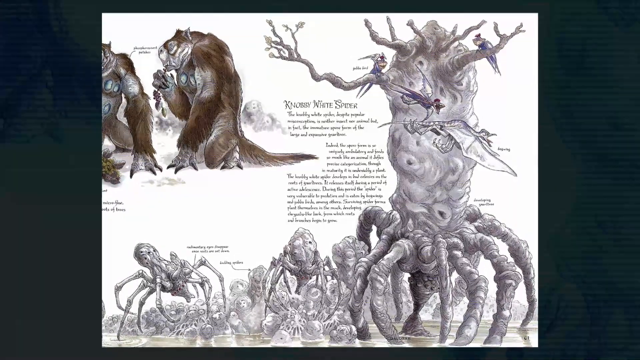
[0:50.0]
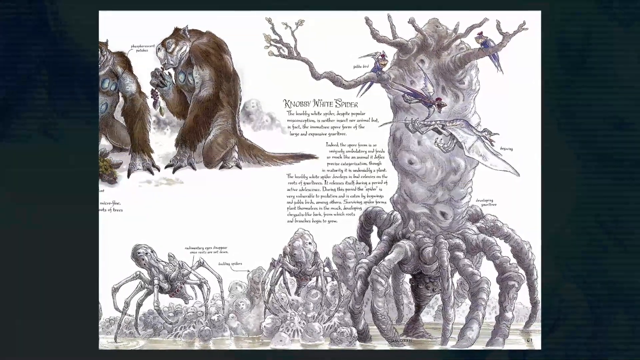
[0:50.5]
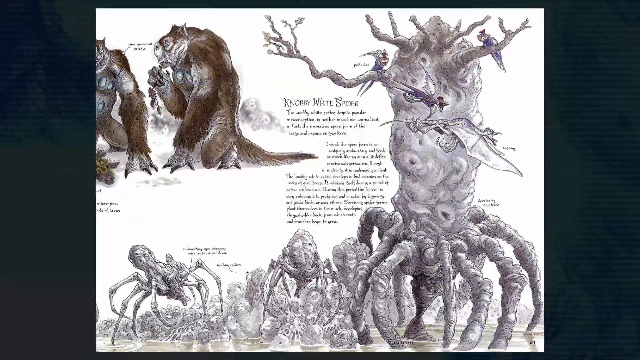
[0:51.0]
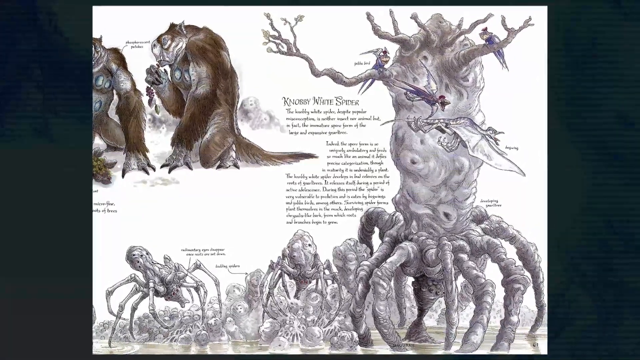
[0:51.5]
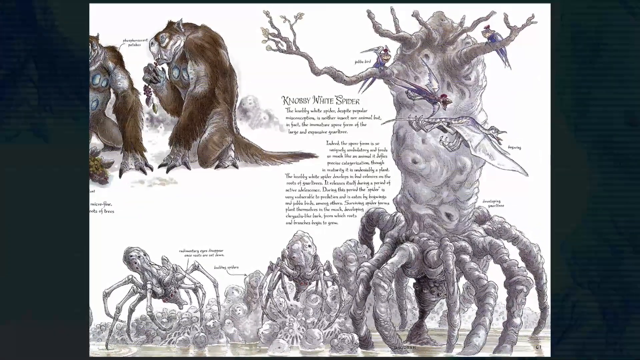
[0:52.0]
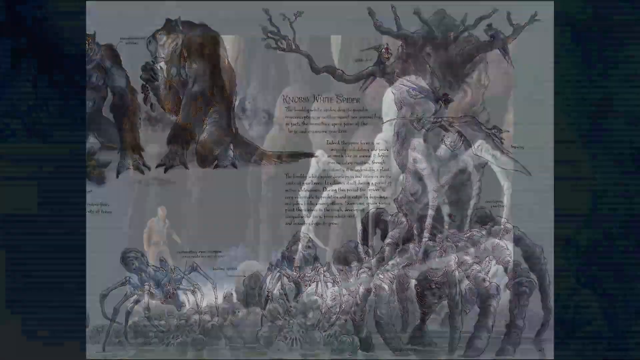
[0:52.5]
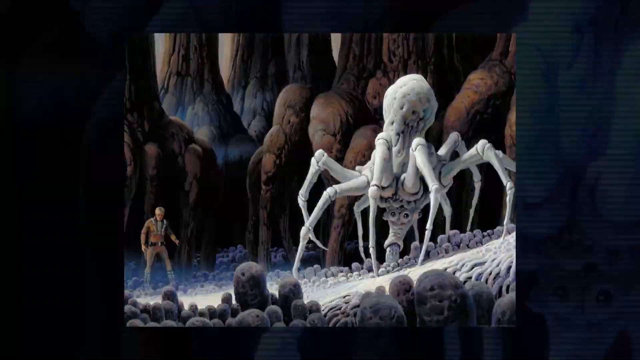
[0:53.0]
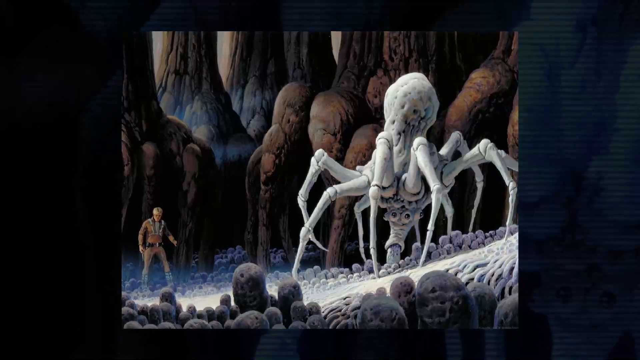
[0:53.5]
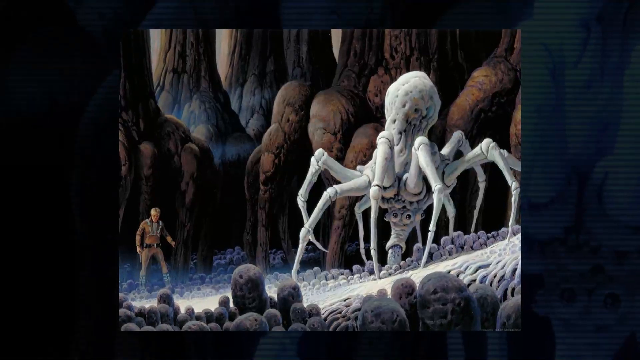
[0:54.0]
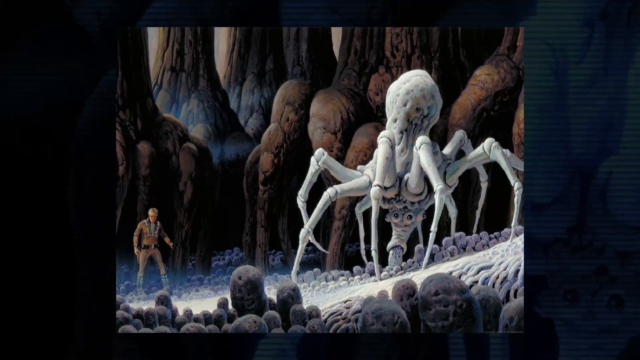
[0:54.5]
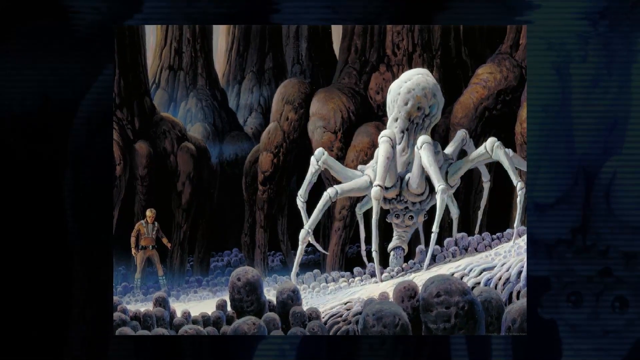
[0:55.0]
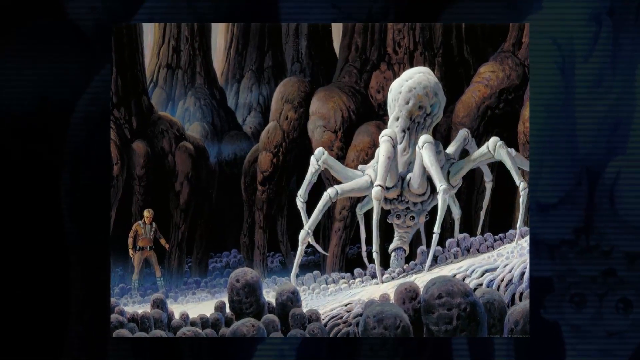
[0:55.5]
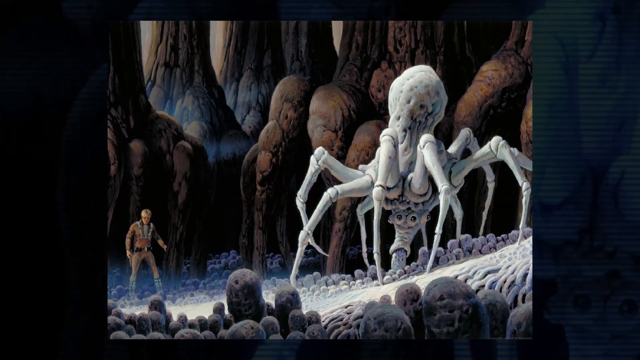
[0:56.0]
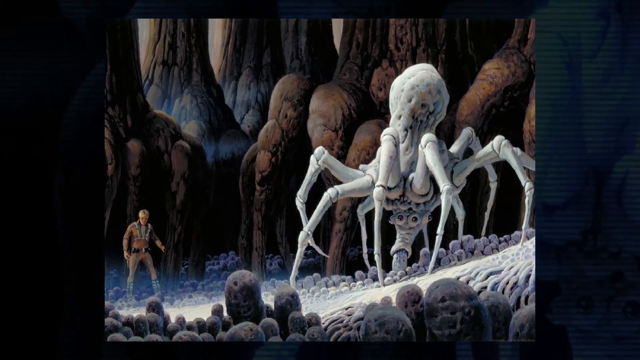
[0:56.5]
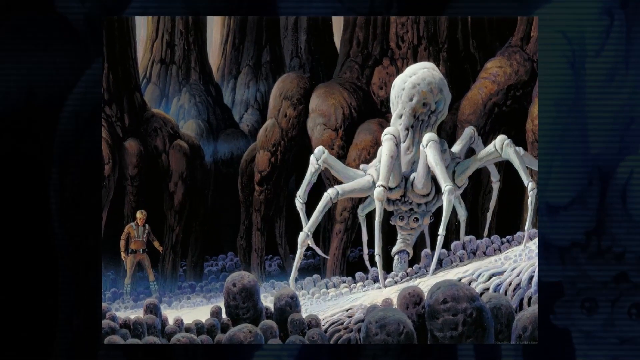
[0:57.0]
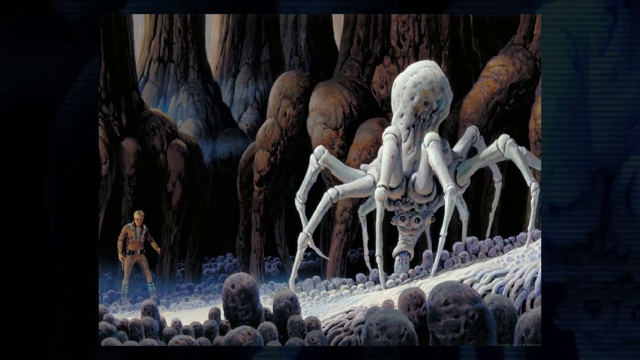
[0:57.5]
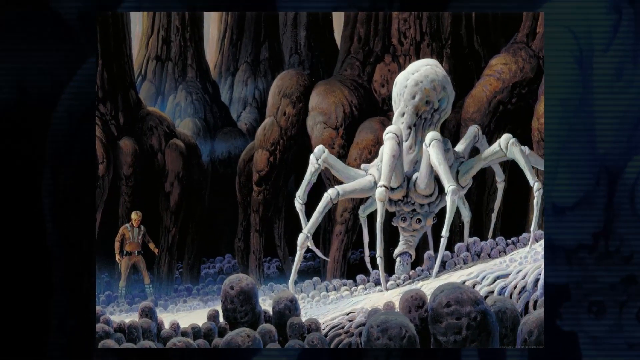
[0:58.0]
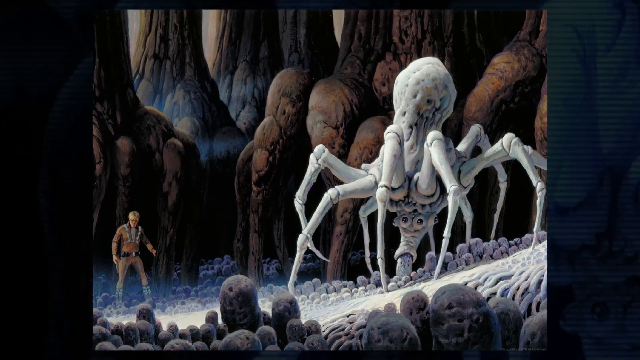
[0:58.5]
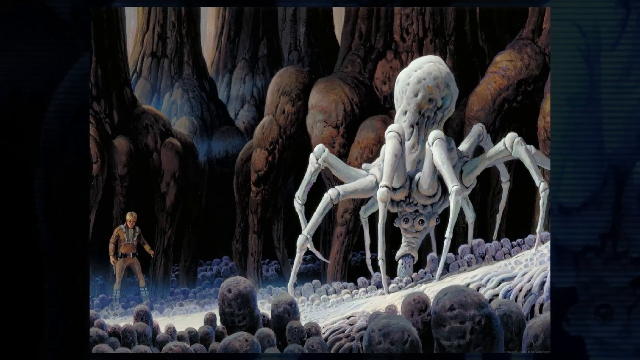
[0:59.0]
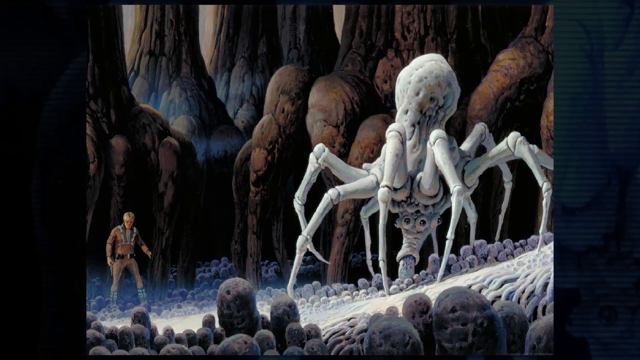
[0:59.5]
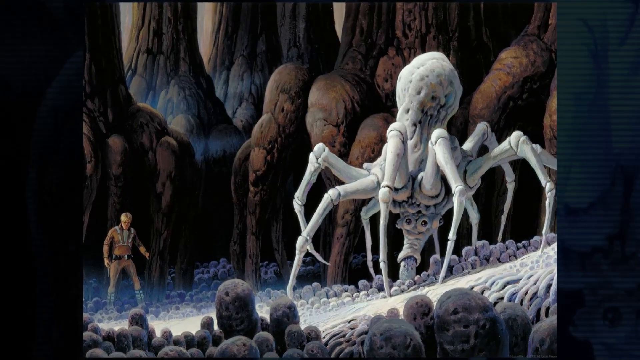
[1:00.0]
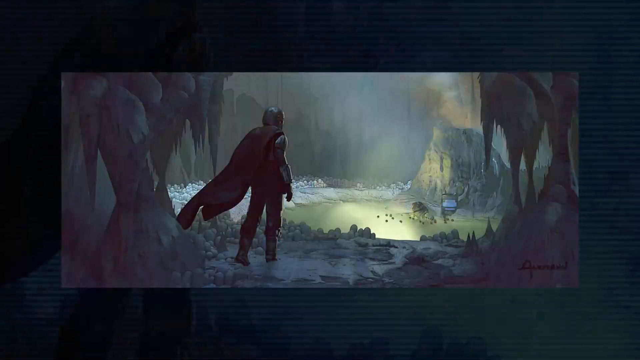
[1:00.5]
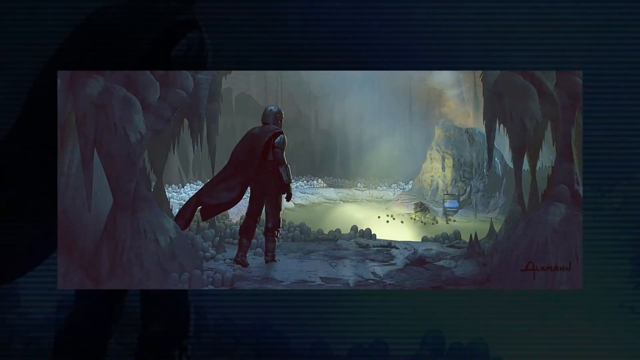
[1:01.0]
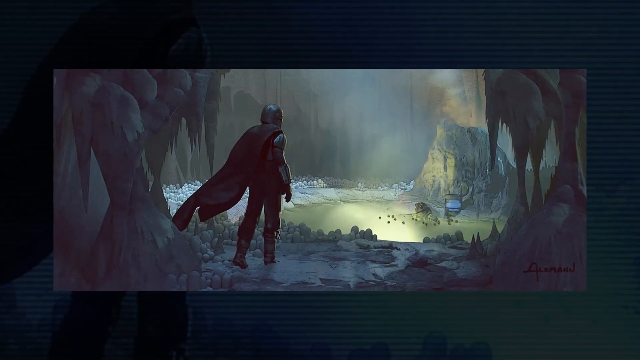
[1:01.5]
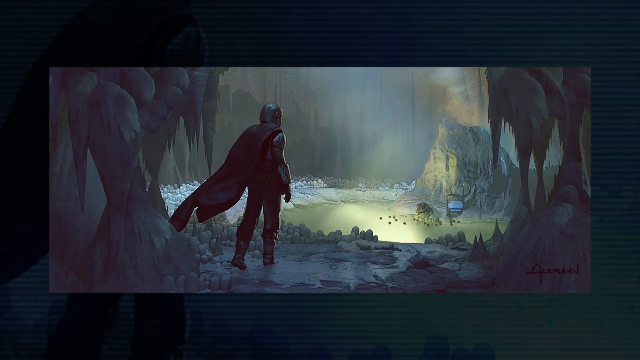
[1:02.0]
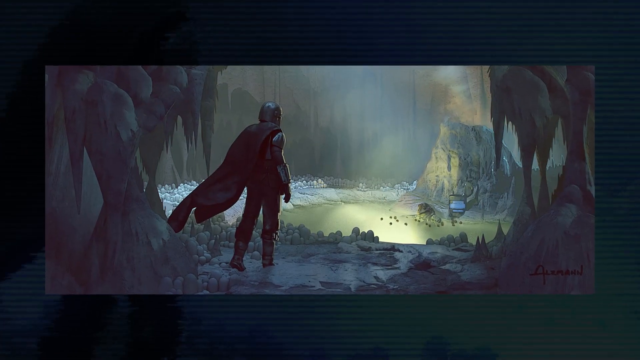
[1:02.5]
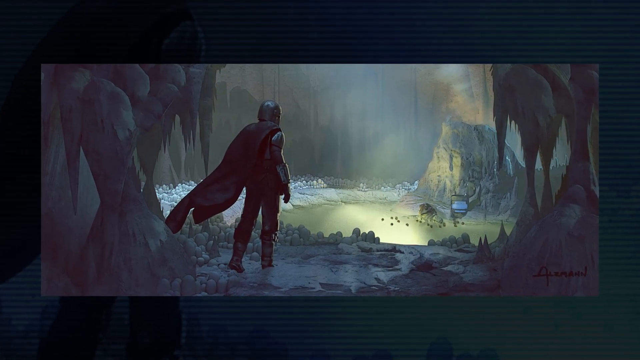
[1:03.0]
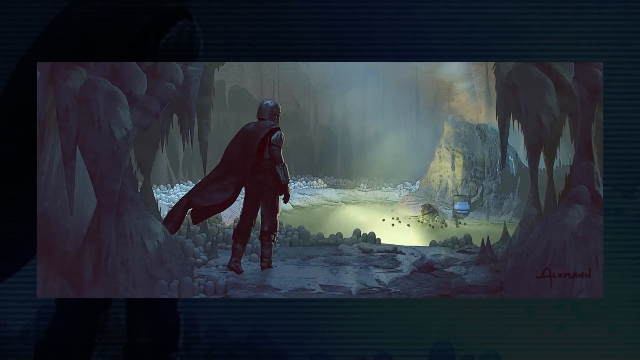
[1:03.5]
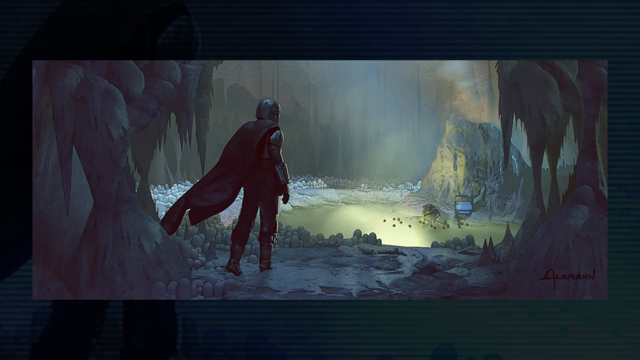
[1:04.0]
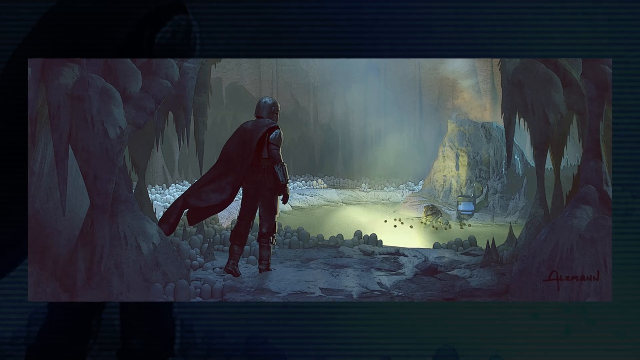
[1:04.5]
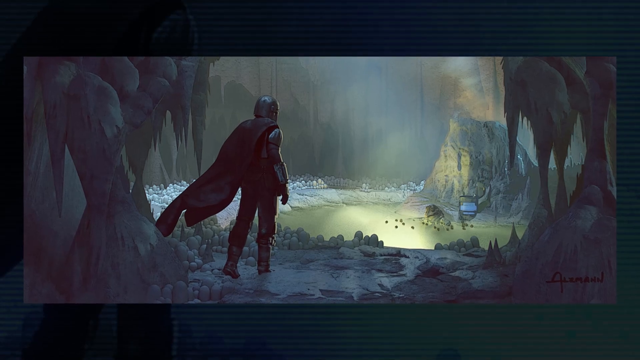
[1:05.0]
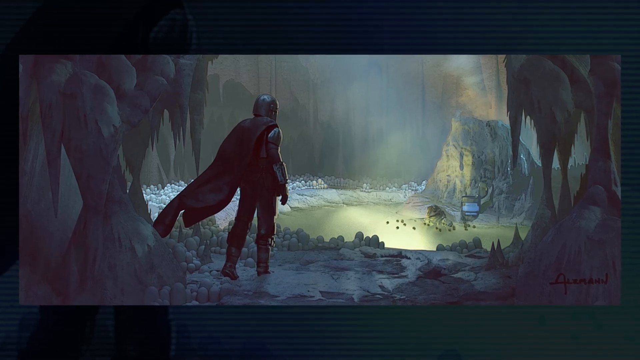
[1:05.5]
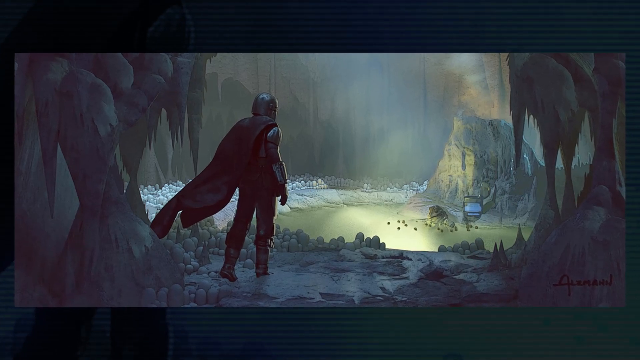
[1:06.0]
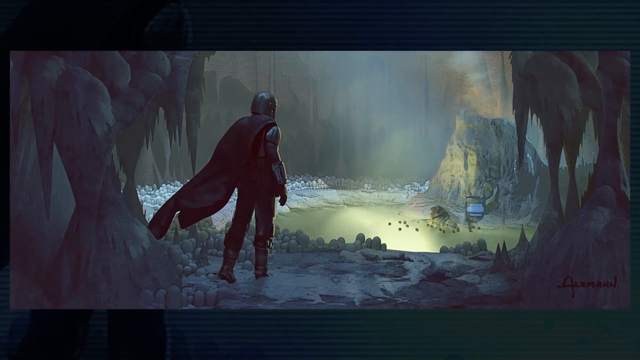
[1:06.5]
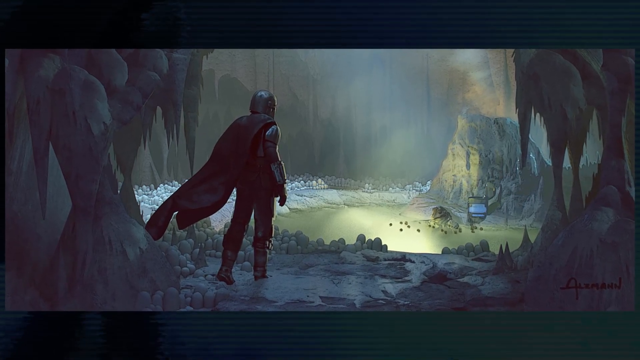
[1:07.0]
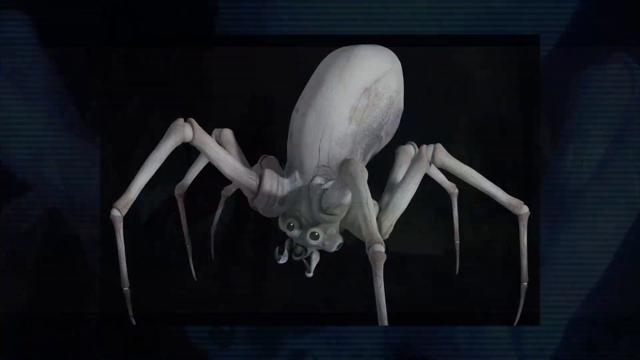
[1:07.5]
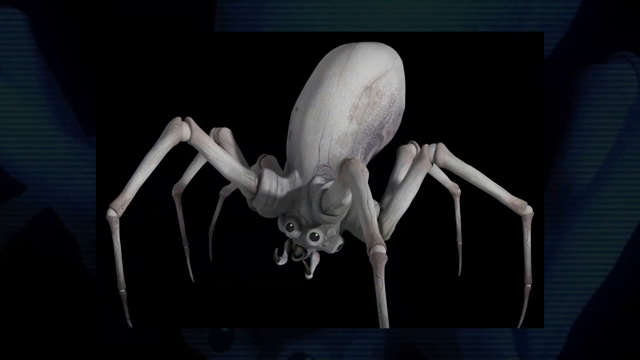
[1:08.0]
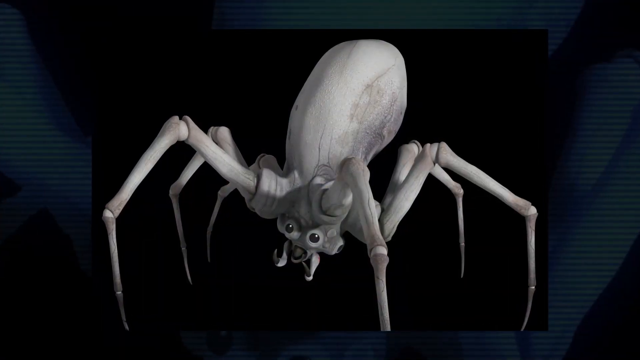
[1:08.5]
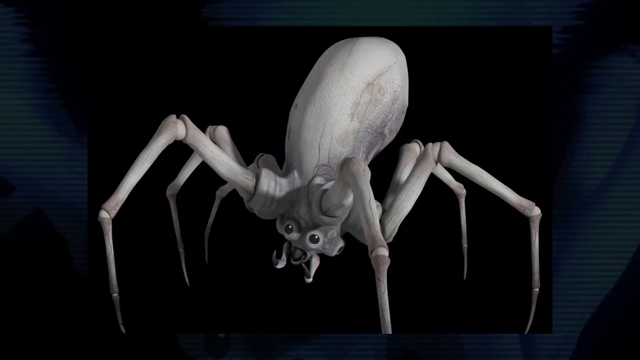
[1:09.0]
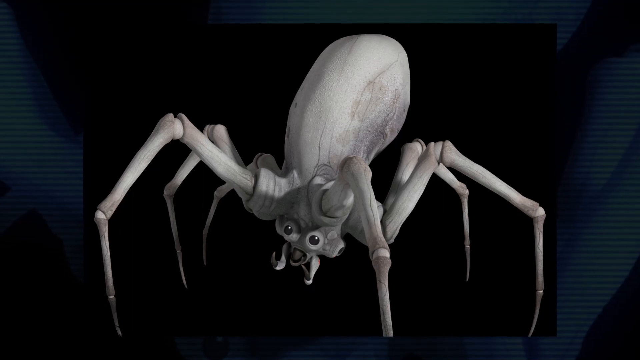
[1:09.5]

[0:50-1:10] A close-up shows a page of illustrations. On the right is a large illustration that looks like a tree with curved, bending roots that look like legs, as if the tree is walking, with illustrations of two other similar creatures next to it. In the upper left of the page is an illustration of a creature that looks like a combination of a bear and a monkey. Then an artist's rendering shows a large, white, spider-like creature with long, skinny legs; at its base is what looks like a face with a snout that has something pouring out of it, with two eyes above the snout. Behind it are trees that look like the ones in the earlier illustration, with long, standing roots that look like legs. In the lower left is the figure of a man, much smaller in relation to everything else in the image. The image fades to another illustration of a human figure wearing a cape and what looks like a suit of armor with a helmet, staring out over a body of water. Stalactites hang around him as if he is in a cave, and in front of him is a mountain in the distance next to the water. Then a model of the spider-like creature appears, with eyes at the bottom, a large elongated body and skinny legs.